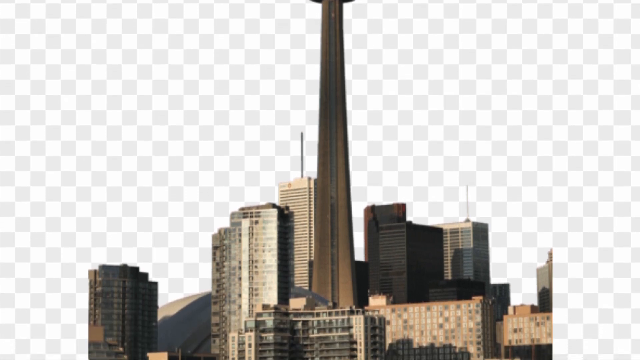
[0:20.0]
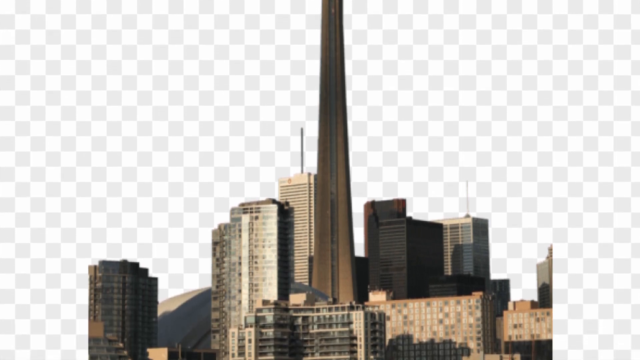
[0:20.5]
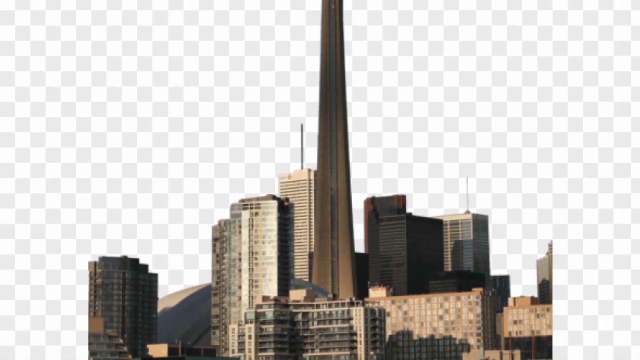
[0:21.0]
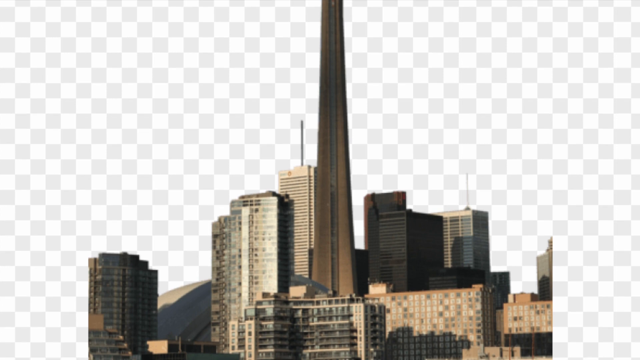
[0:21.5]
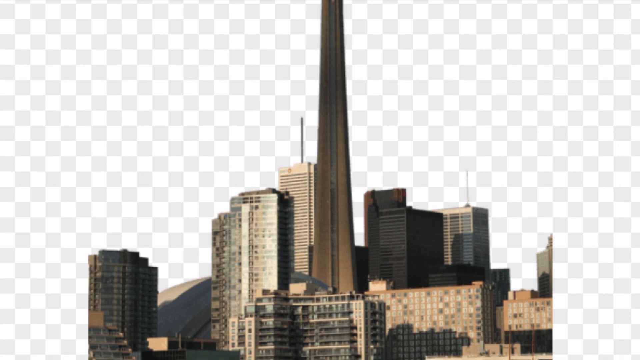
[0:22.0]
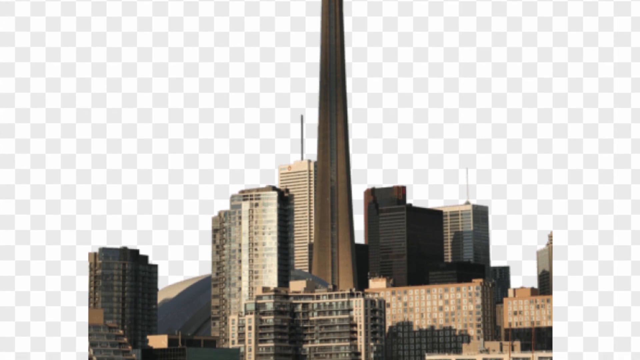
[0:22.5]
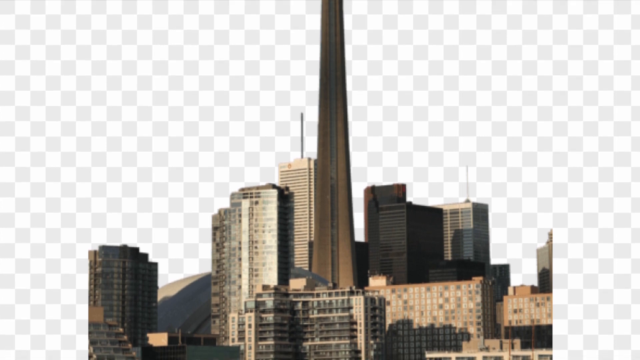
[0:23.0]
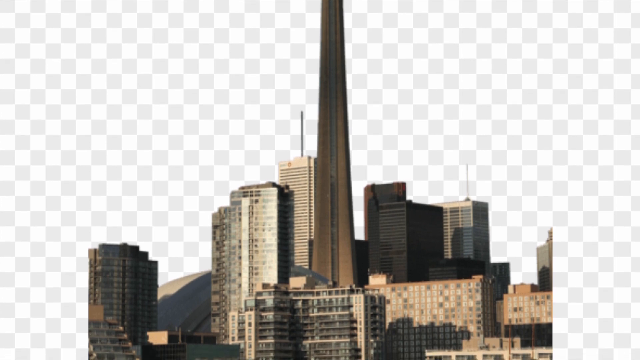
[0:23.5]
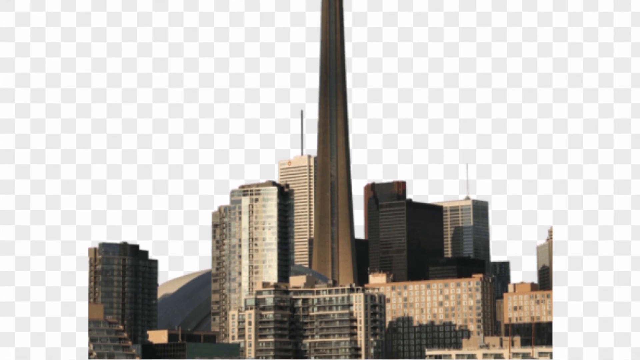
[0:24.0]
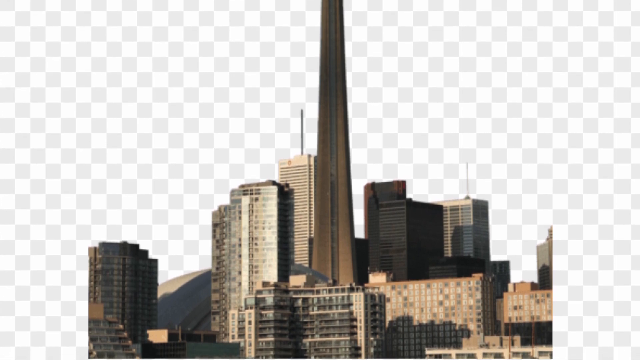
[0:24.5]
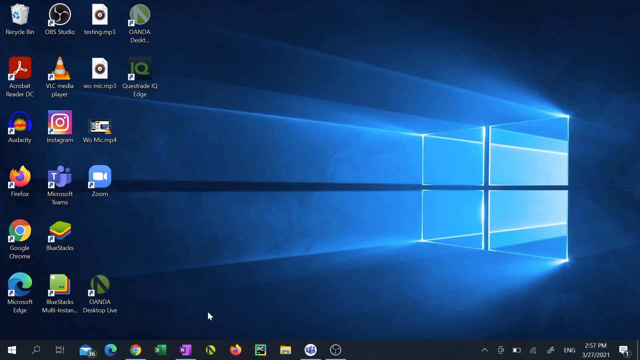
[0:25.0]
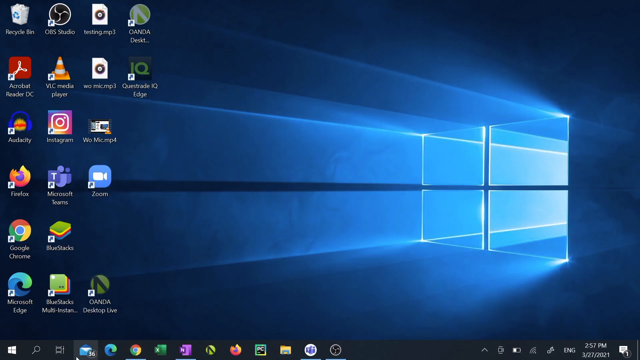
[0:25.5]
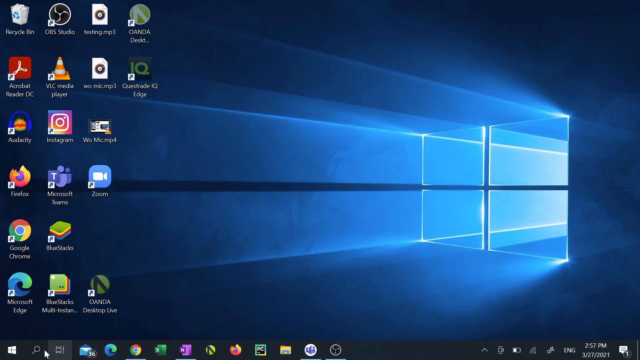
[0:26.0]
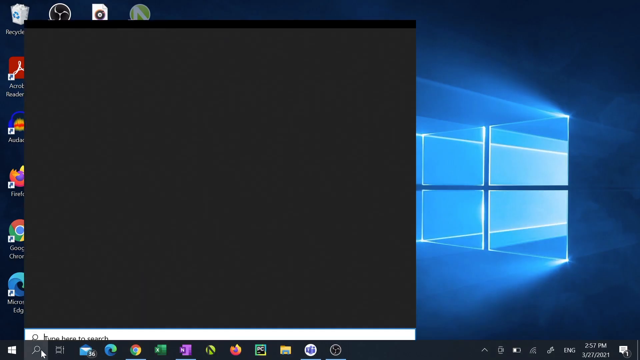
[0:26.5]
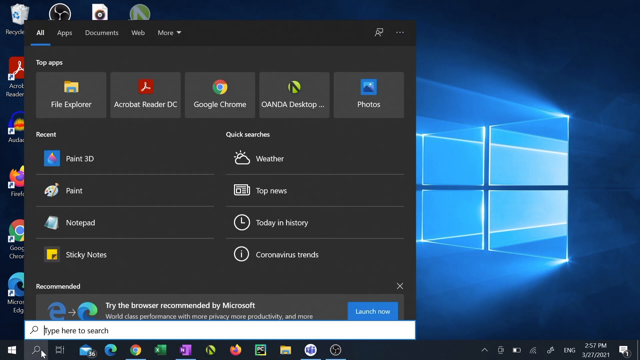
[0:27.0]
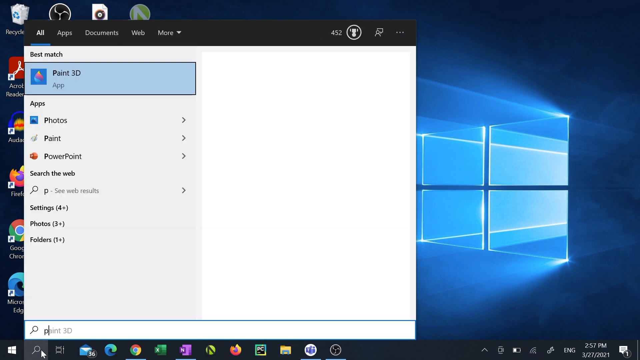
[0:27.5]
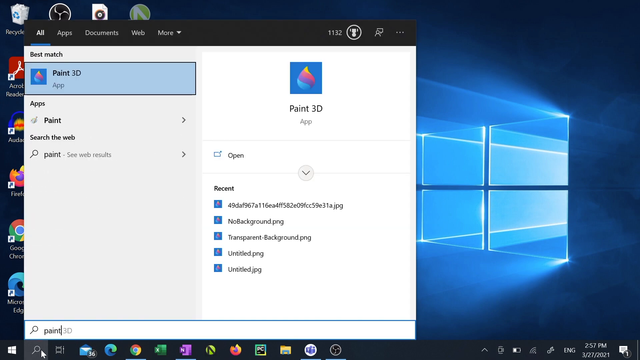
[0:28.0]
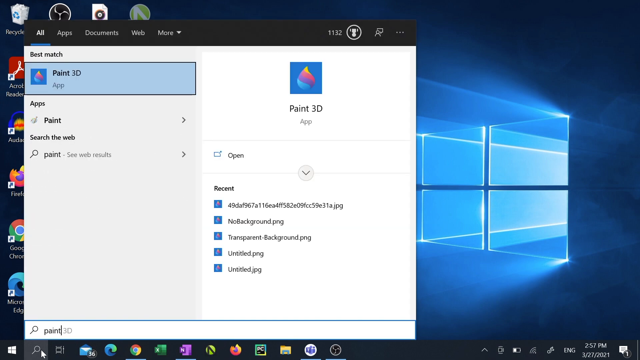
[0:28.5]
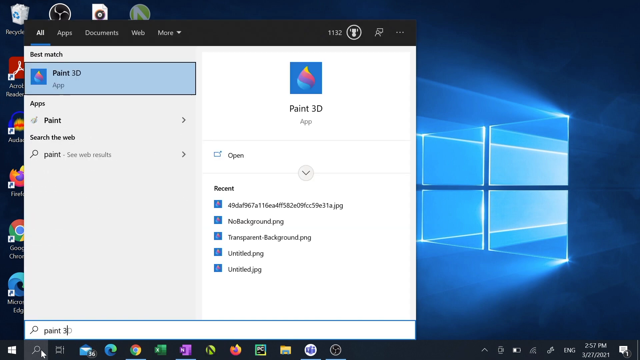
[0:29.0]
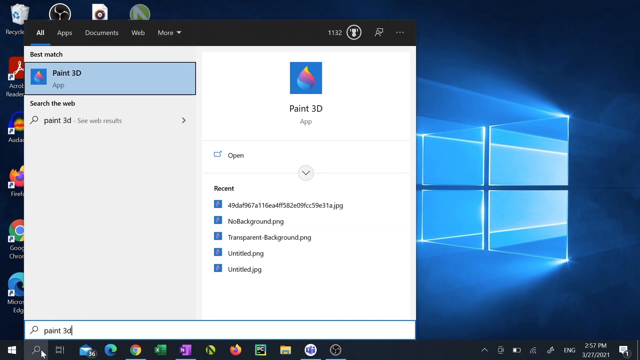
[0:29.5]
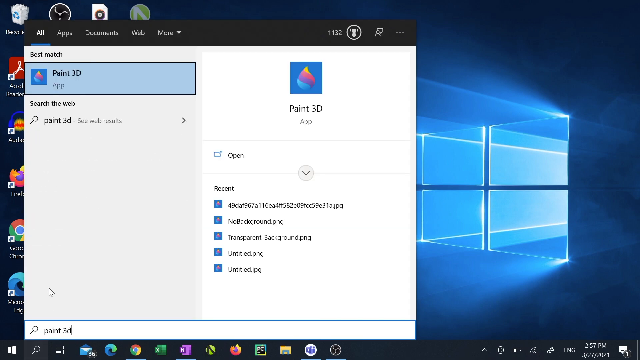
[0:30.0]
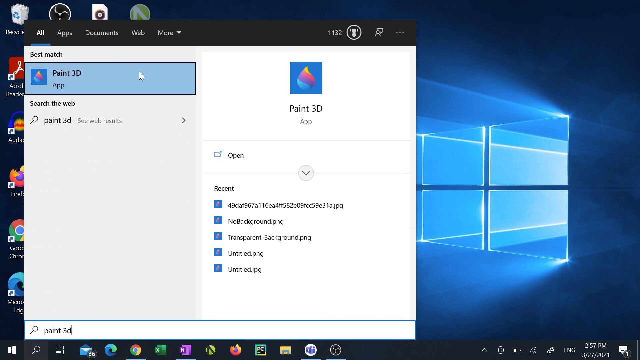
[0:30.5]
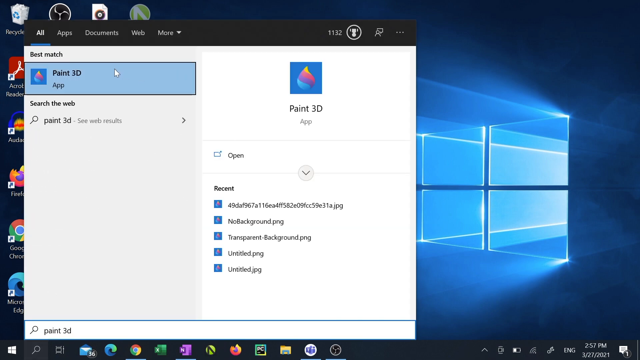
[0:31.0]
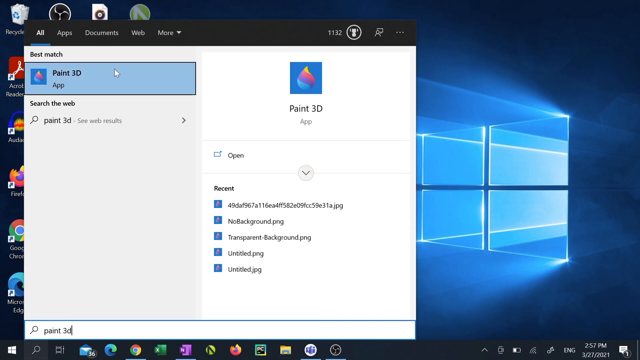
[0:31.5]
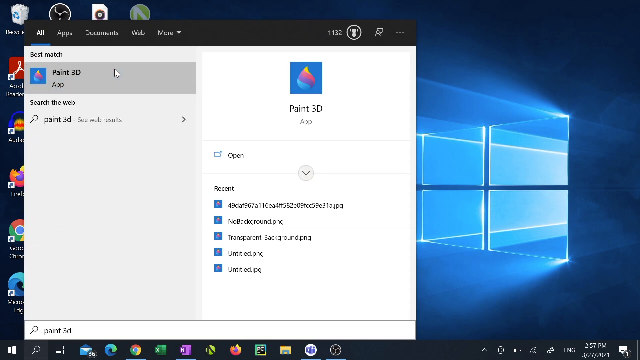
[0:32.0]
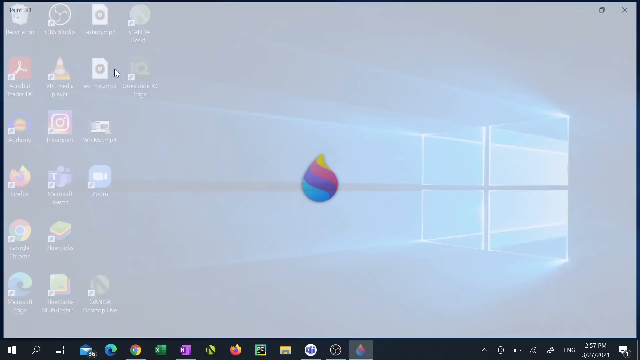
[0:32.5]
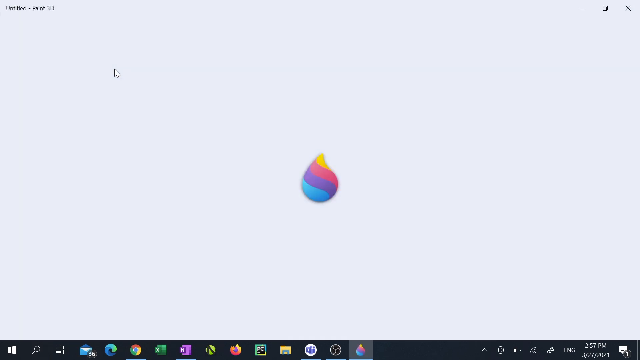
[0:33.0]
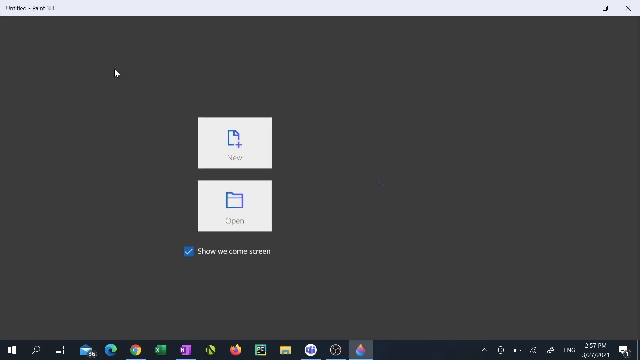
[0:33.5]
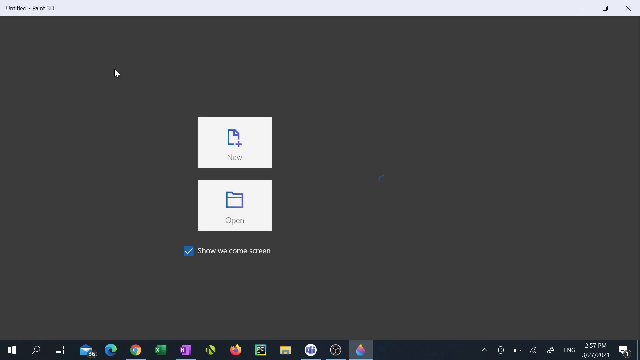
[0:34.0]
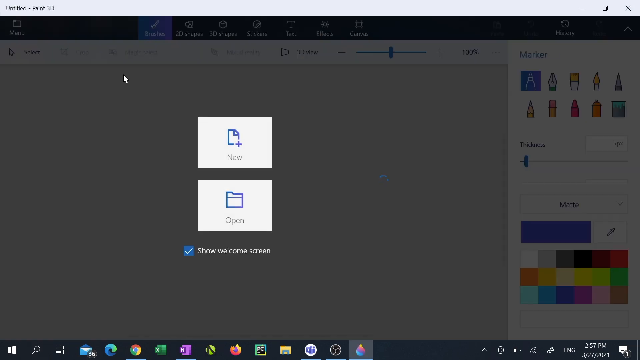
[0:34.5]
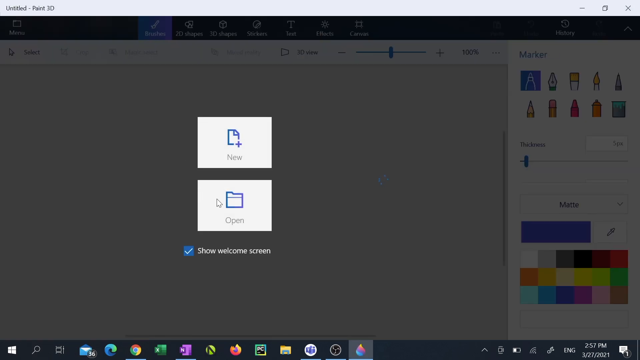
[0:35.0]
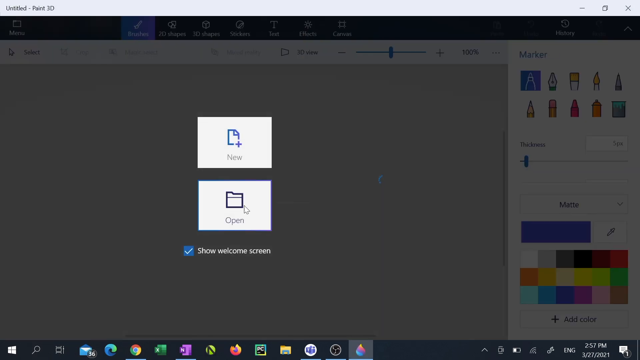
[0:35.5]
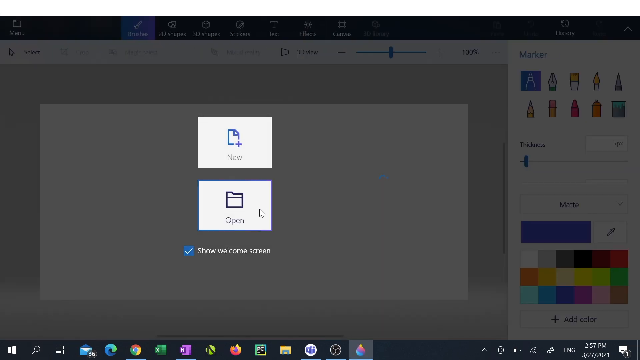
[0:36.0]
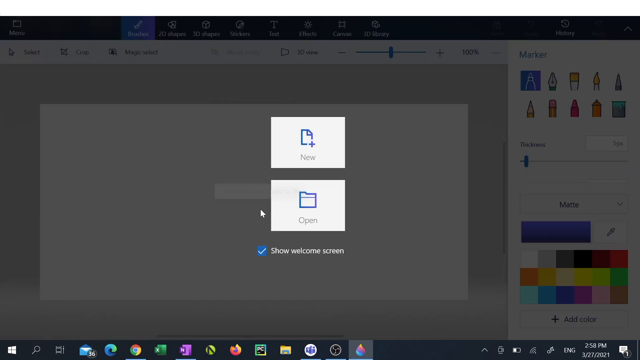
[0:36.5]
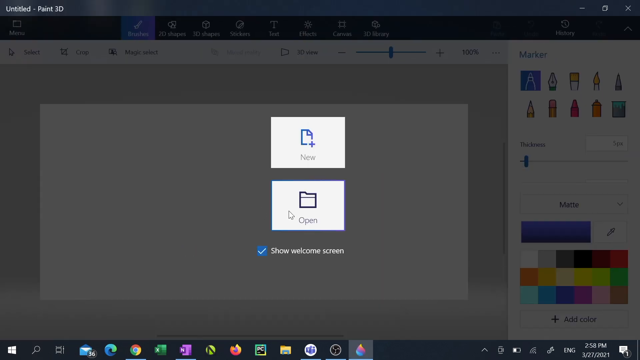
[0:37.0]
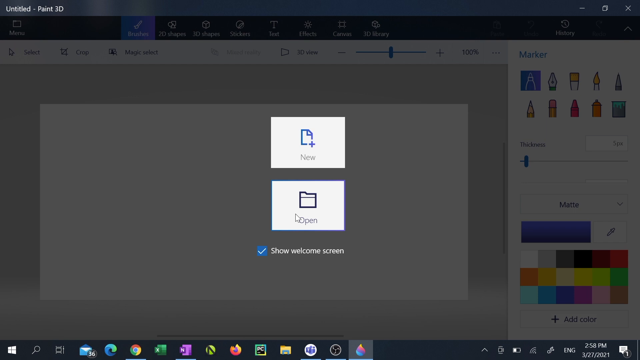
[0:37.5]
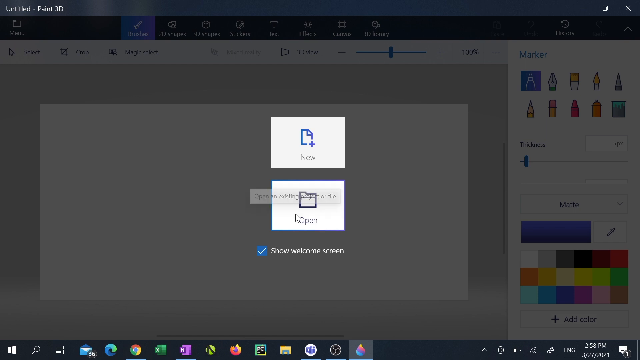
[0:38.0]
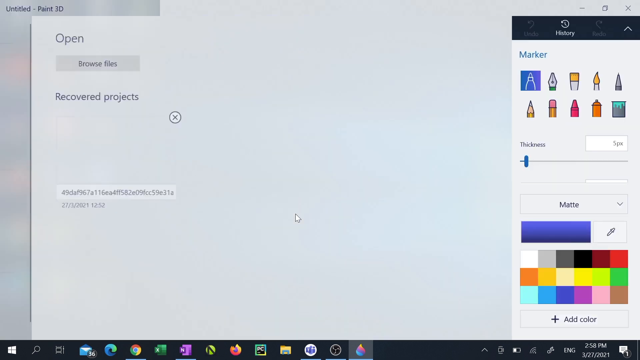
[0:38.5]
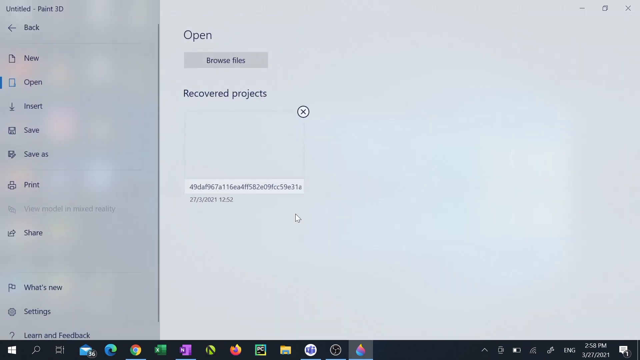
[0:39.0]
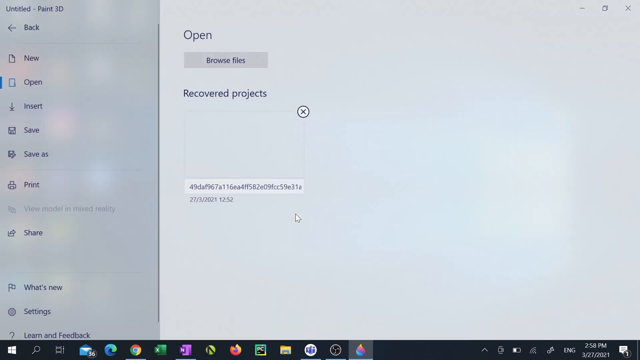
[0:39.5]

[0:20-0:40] The camera has panned down from the top of the thin tower in the middle of the video, and the background is still white. The view hovers over several other buildings at the foot of the long tower, varying in colour and shape. The scene then transitions to a Windows home screen with a variety of application logos on the left-hand side. The background is blue, with a blue Windows logo on the right and light shining through it from right to left. The user opens the taskbar, which brings up a black box, types "paint 3D" into the search bar and opens the application. The application opens with a new option and an open option; the user moves the mouse down to the right and clicks the open button. This opens a white Windows Explorer menu with a grey left sidebar. There is a "Browse Files" button, and underneath it reads "Recovered Projects" followed by a long string of numbers, showing one item.